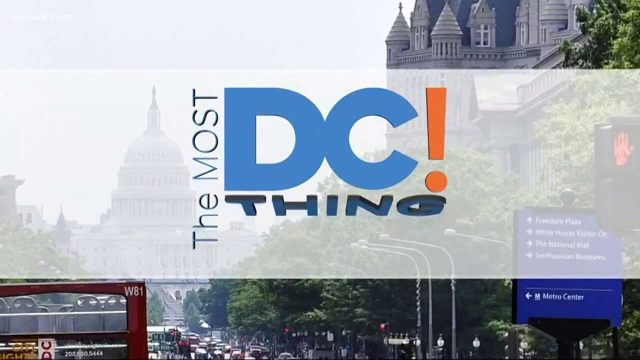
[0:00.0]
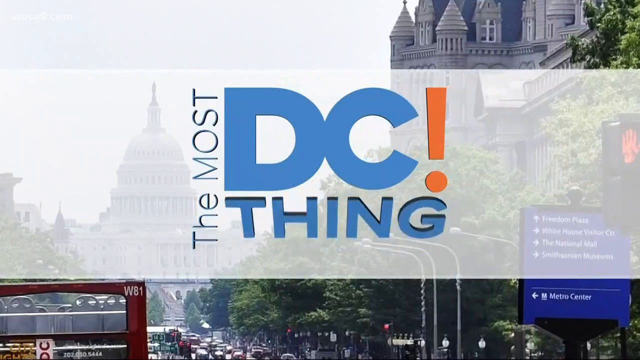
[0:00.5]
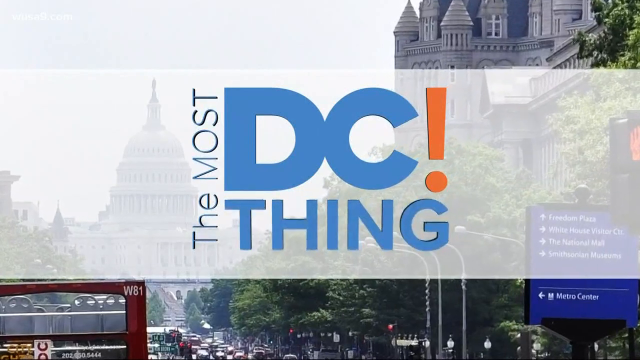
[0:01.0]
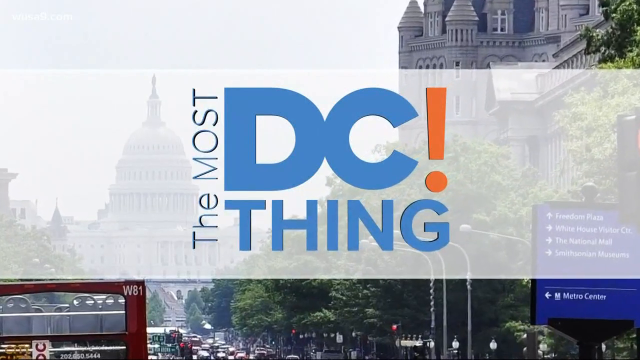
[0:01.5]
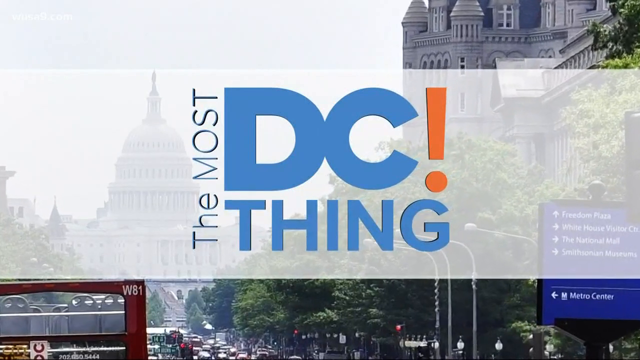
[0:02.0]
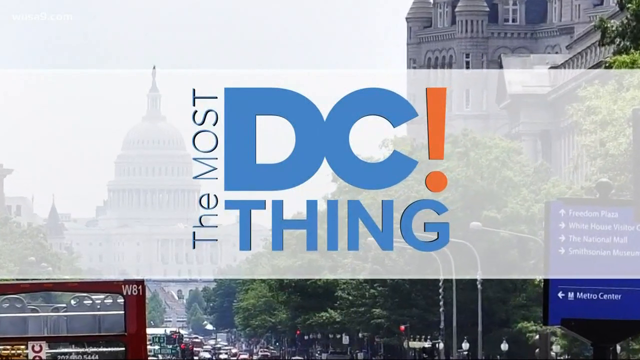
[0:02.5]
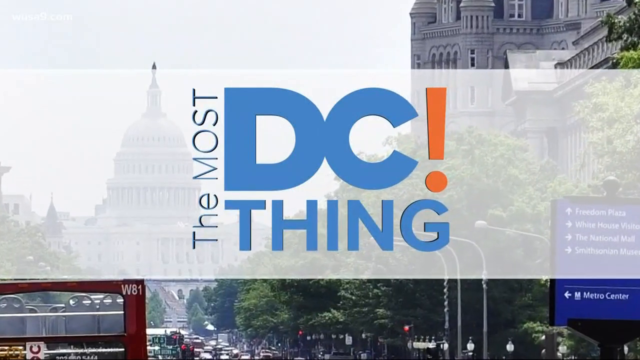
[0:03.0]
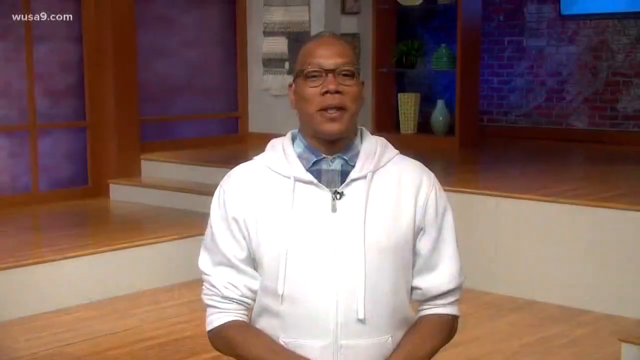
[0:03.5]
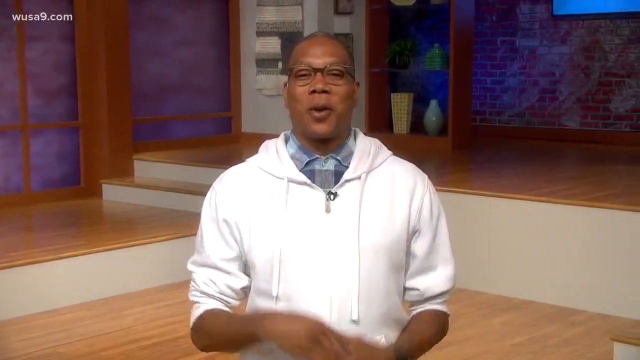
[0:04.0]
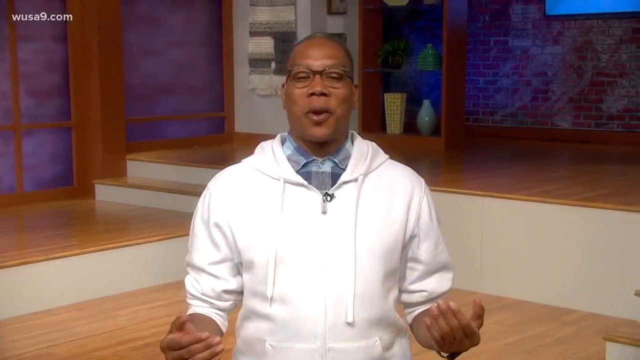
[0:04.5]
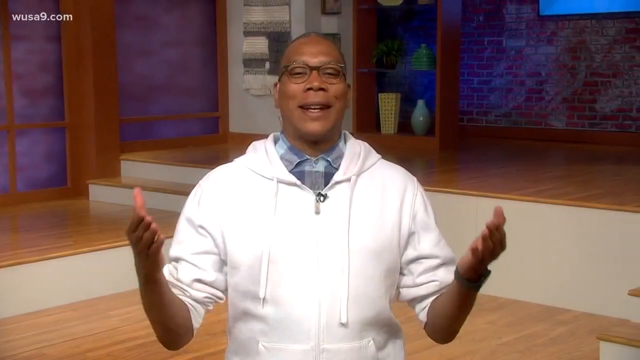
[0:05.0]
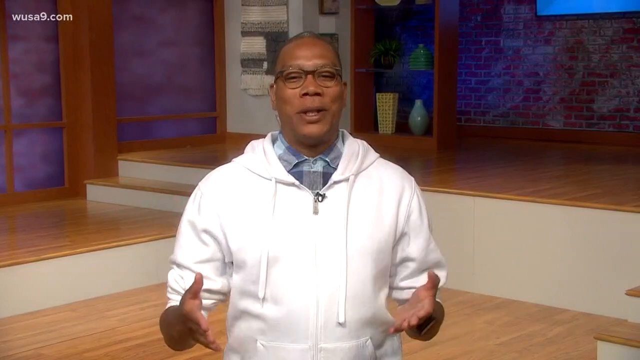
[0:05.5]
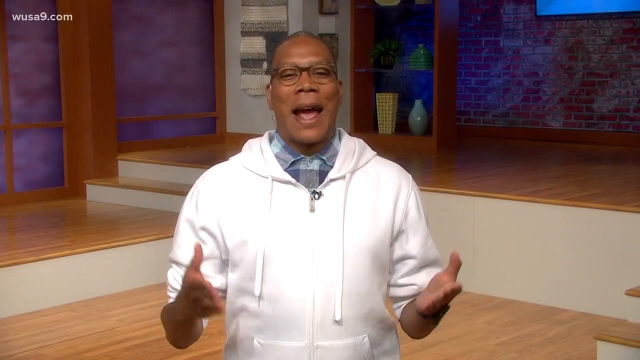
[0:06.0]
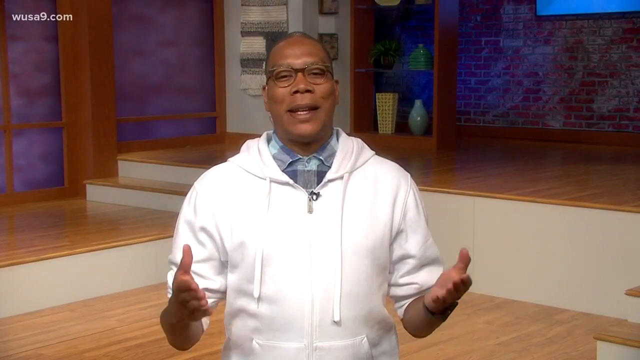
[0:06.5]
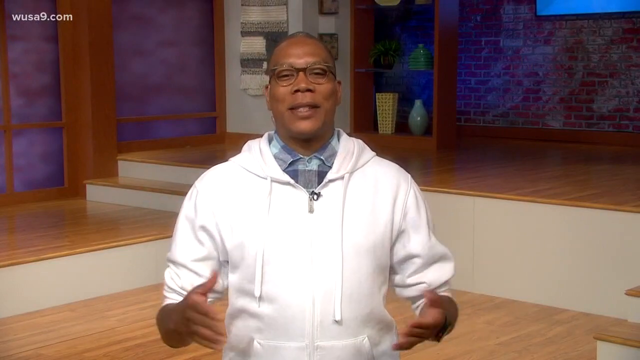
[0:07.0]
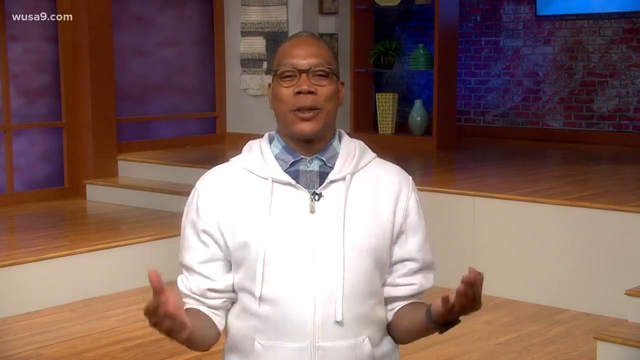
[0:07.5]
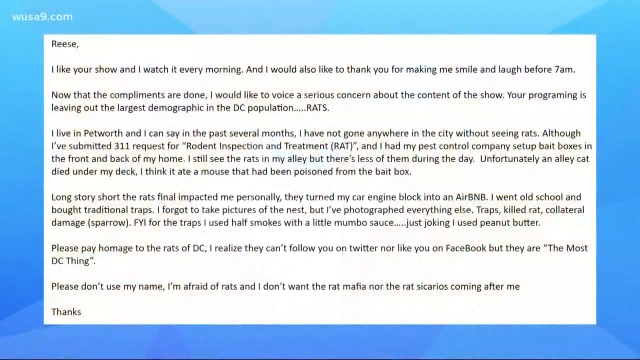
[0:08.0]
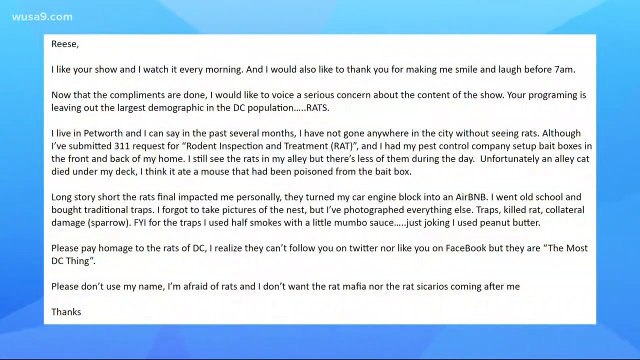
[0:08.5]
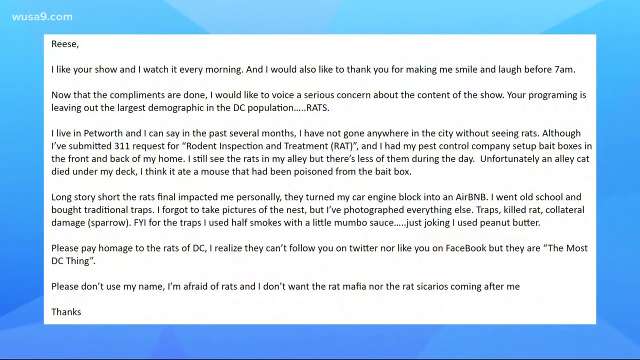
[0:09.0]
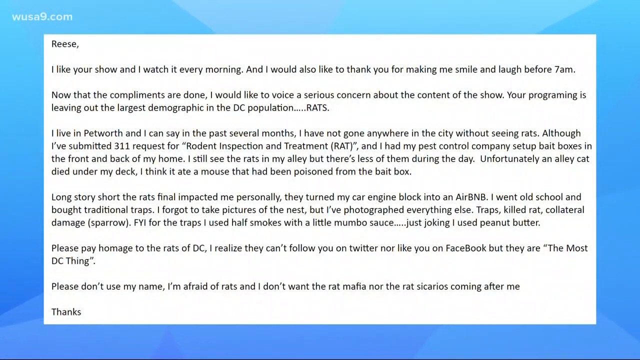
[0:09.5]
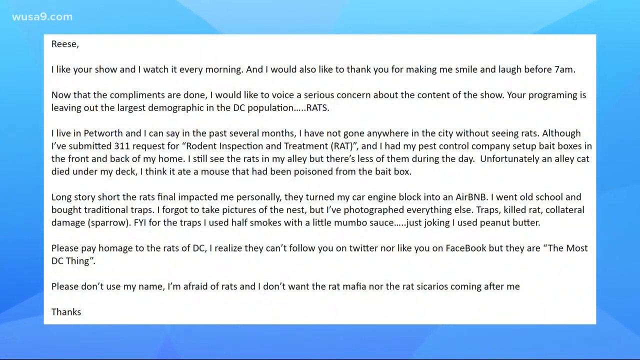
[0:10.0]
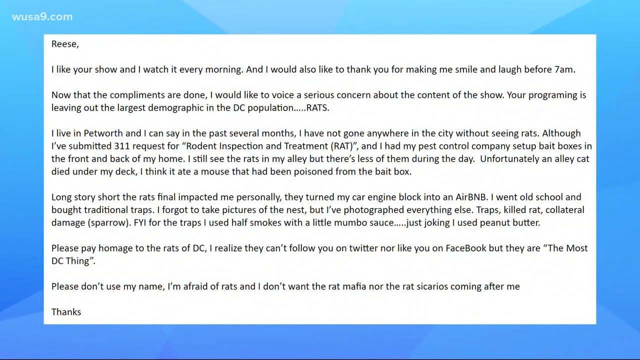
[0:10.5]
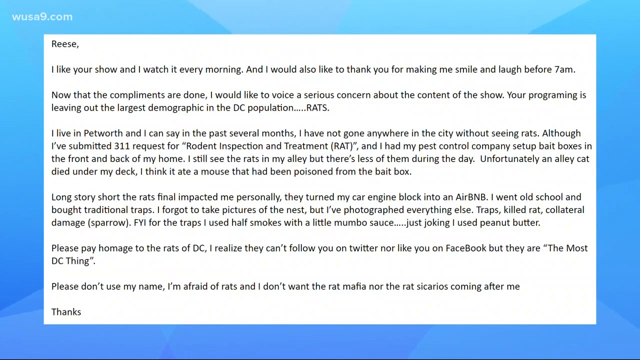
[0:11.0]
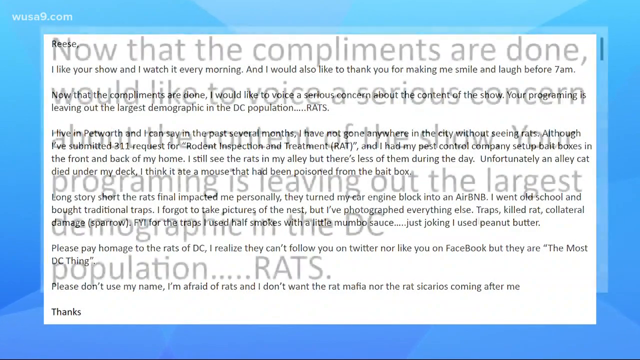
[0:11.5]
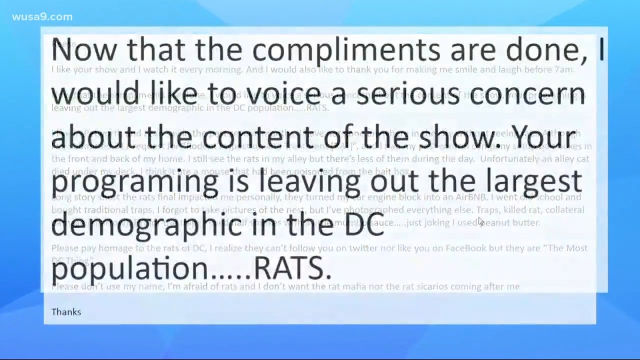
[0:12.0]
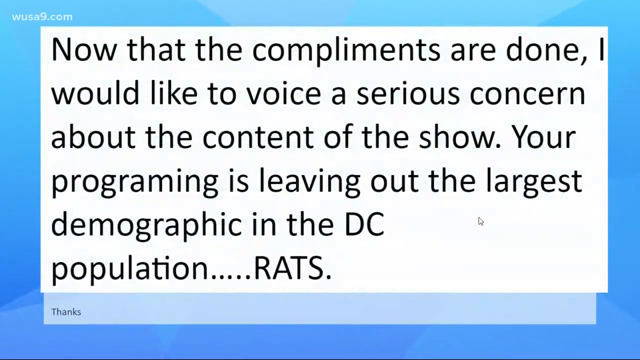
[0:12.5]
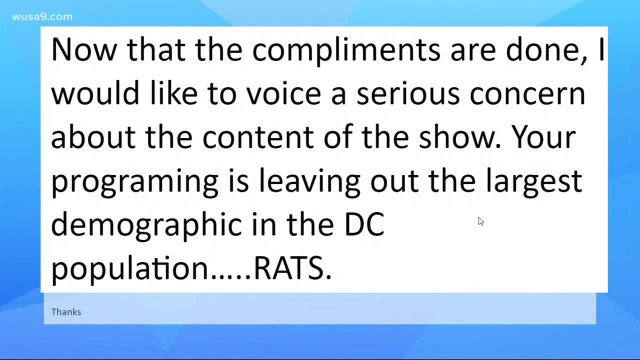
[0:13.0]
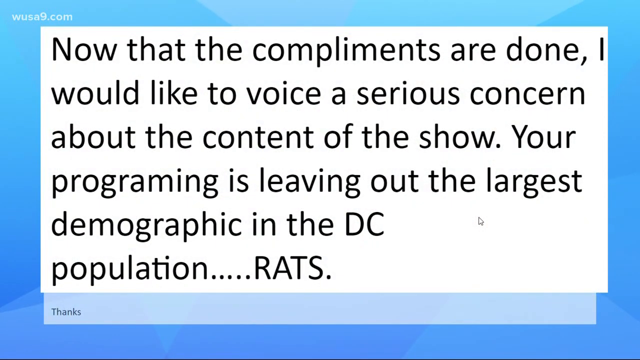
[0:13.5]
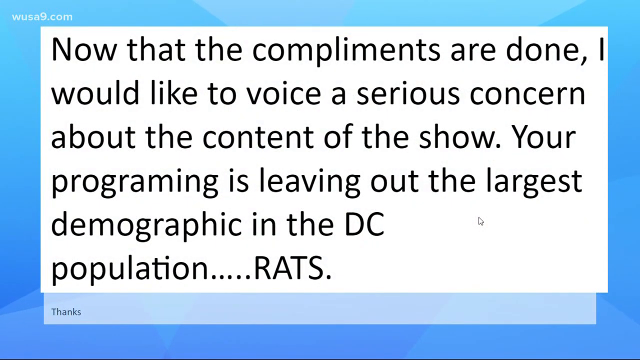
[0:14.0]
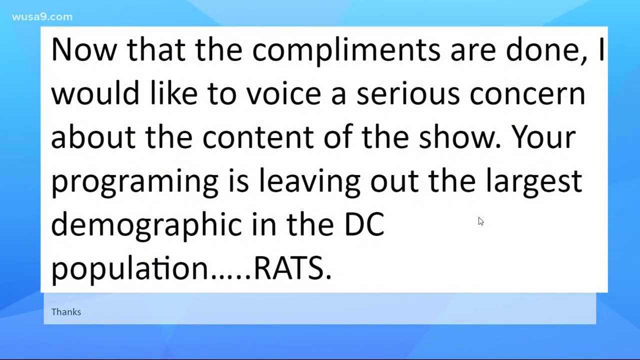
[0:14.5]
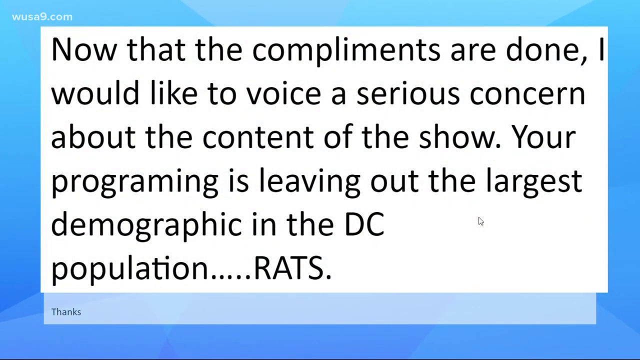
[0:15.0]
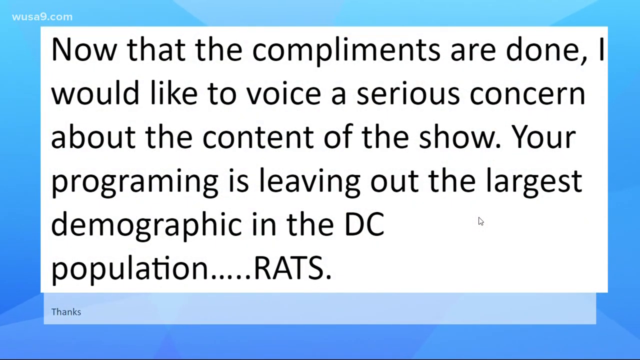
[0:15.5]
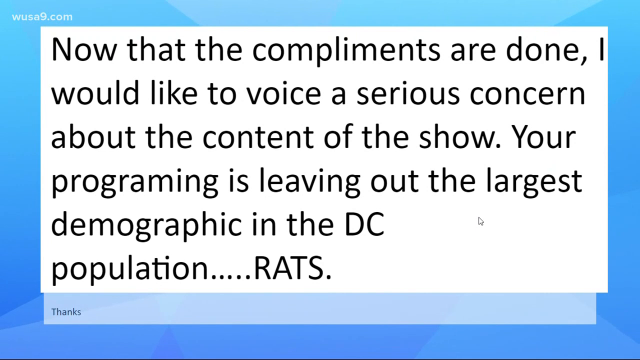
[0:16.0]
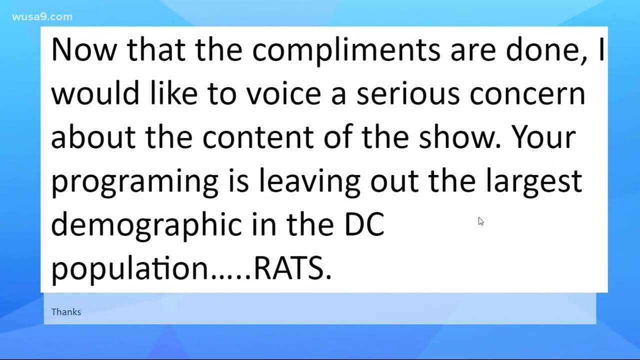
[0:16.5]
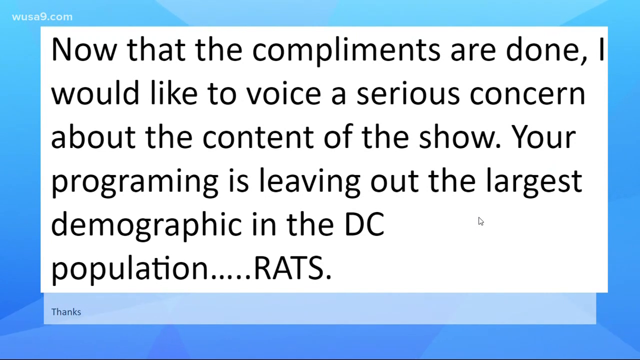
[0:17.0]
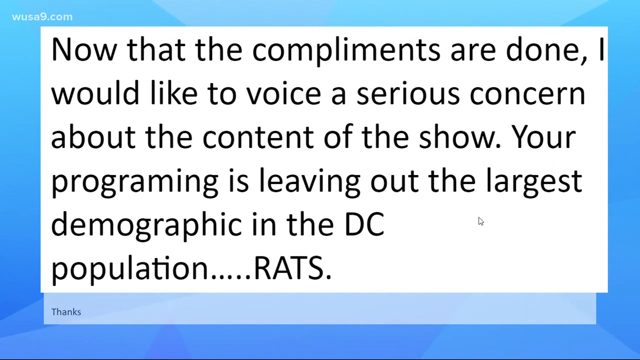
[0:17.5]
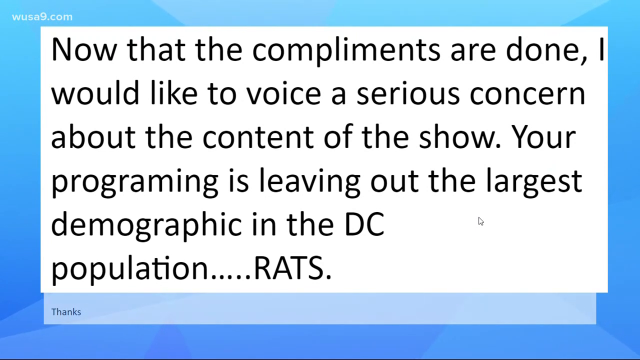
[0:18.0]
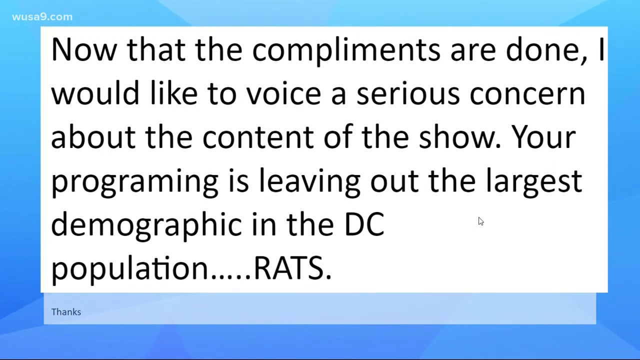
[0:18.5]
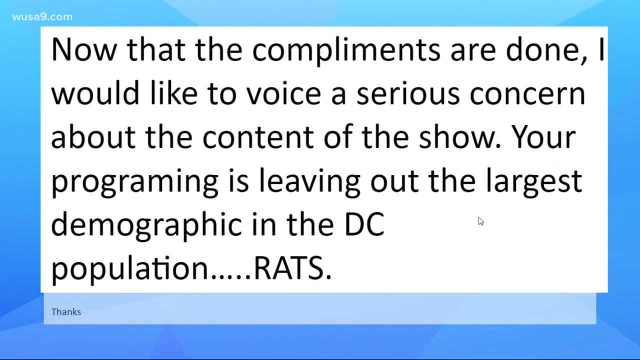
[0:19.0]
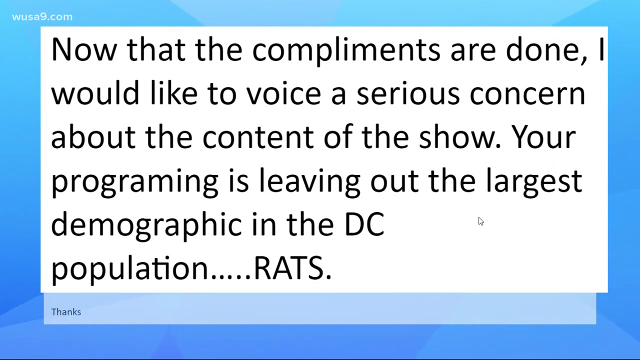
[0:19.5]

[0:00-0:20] An African-American man in prescription glasses, wearing a white hoodie and a checked blue shirt, faces the camera, talking and smiling while gesturing with both hands. The video then cuts to a screenshot of a document with the message: 'Reese, I like your show and I watch it every morning and I would also like to thank you for making me smile and Laugh before 7 a.m Now that the compliments are done, I would like to voice a serious concern about the content of the show. Your programming is leaving out the largest demographic in the DC population, rats. I live in Petworth and I can say that in the past several months, I have not gone anywhere in the city without seeing rats. Although I've submitted 311 requests for rodent inspection and treatment, and I had my pest control company set up bait boxes in the front and back of my home, I still see the rats in my alley but there's less of them during the day. Unfortunately, an alley cat died under my deck. I think it ate a mouse that had been poisoned from the bait box.'